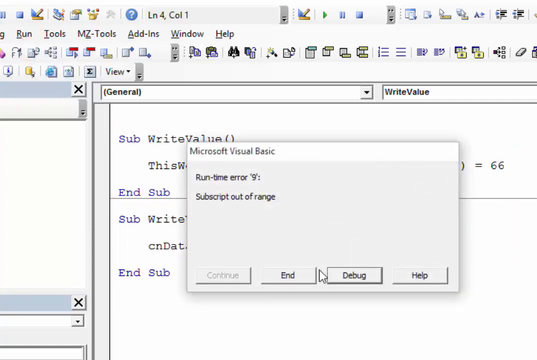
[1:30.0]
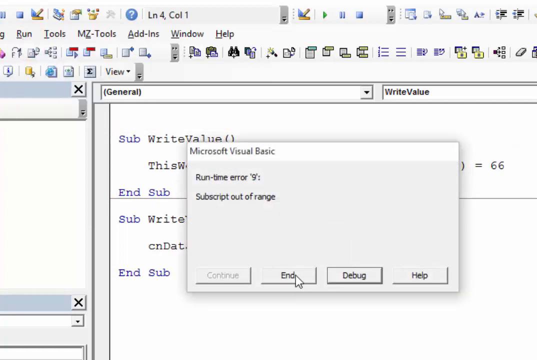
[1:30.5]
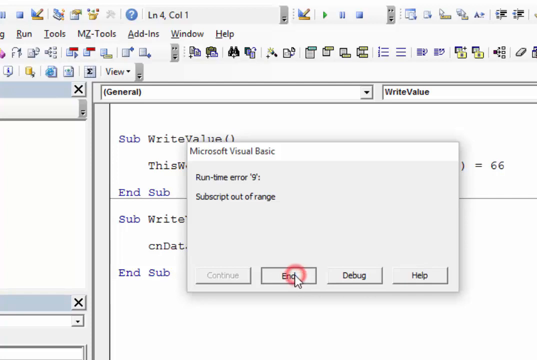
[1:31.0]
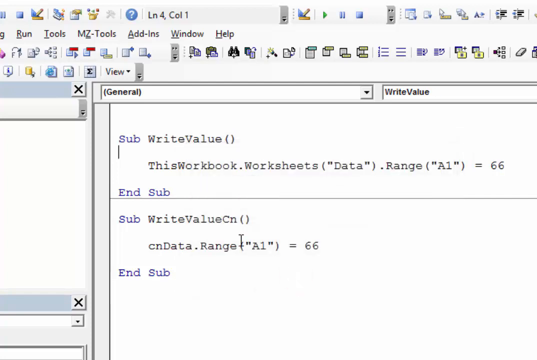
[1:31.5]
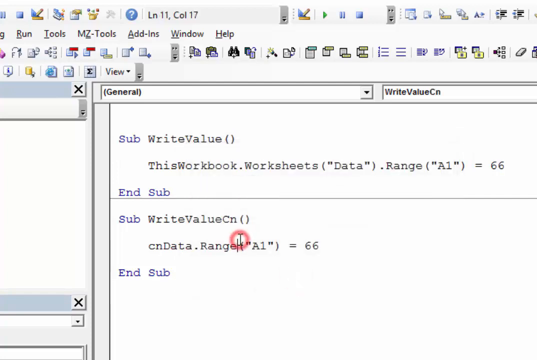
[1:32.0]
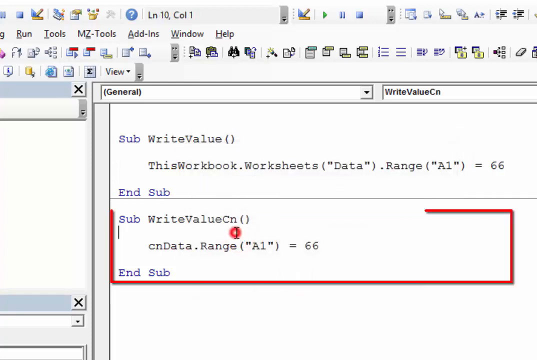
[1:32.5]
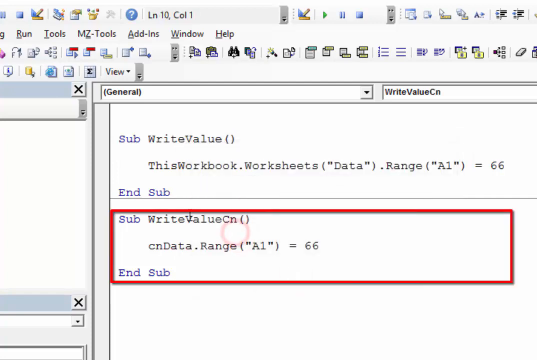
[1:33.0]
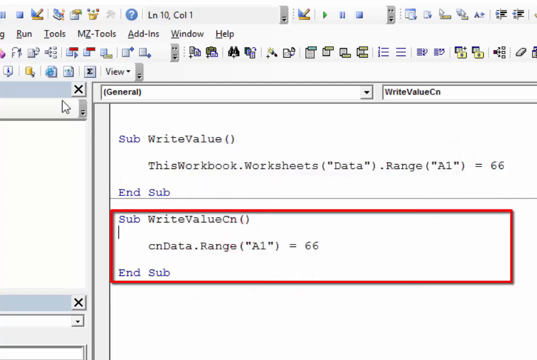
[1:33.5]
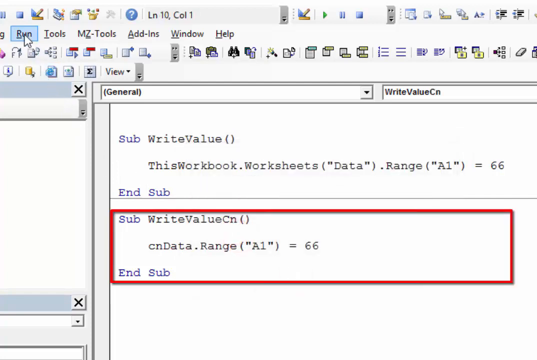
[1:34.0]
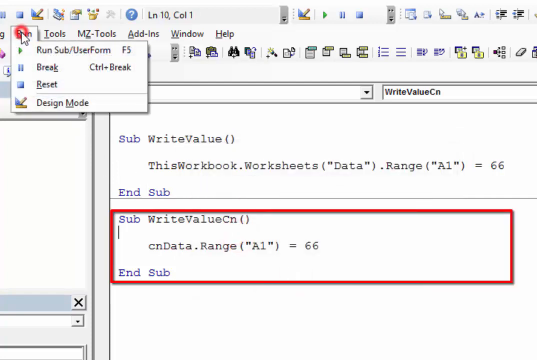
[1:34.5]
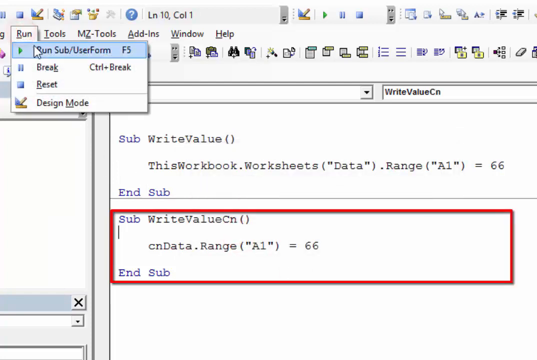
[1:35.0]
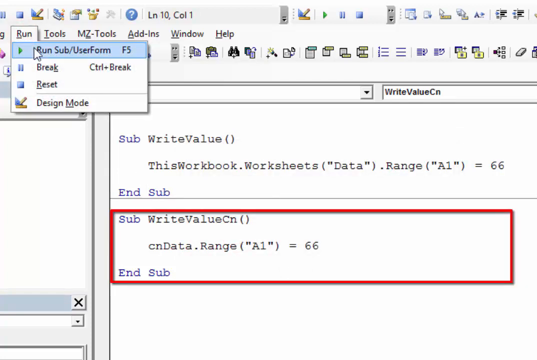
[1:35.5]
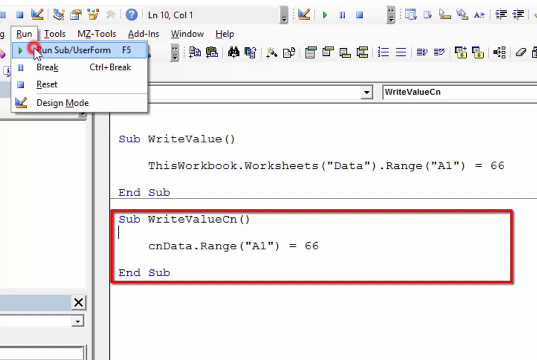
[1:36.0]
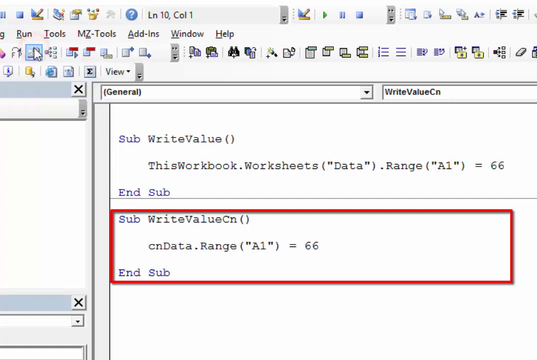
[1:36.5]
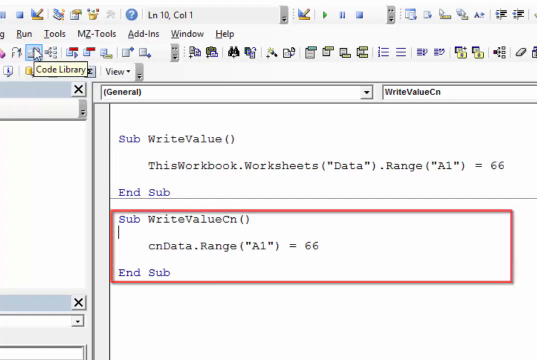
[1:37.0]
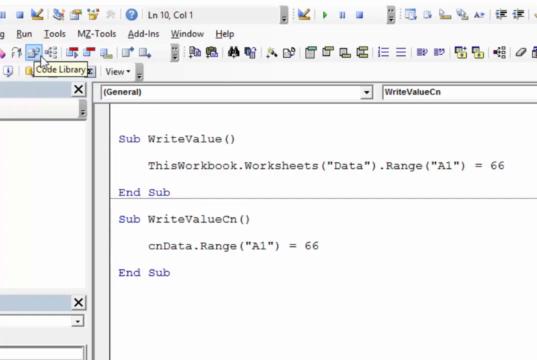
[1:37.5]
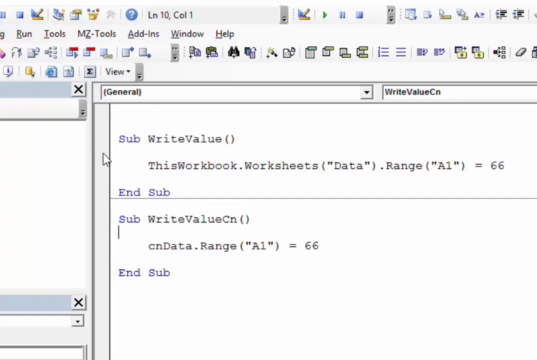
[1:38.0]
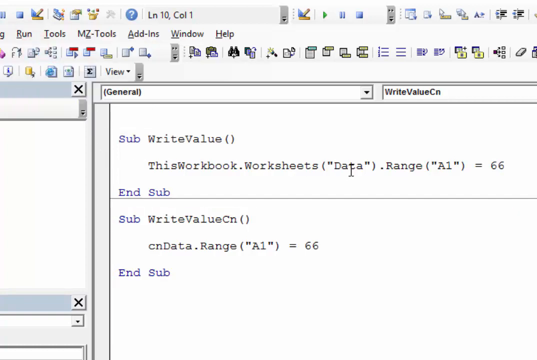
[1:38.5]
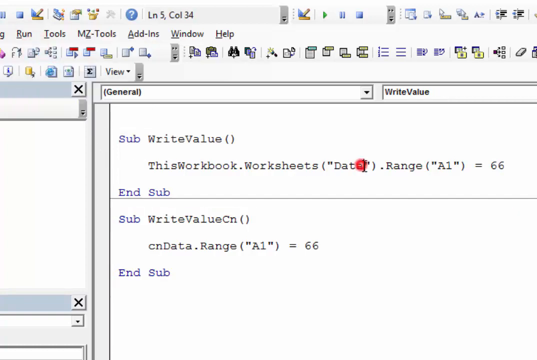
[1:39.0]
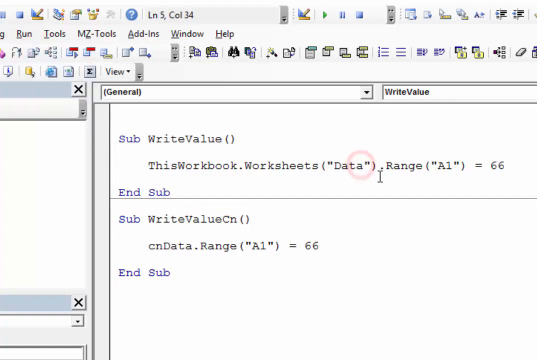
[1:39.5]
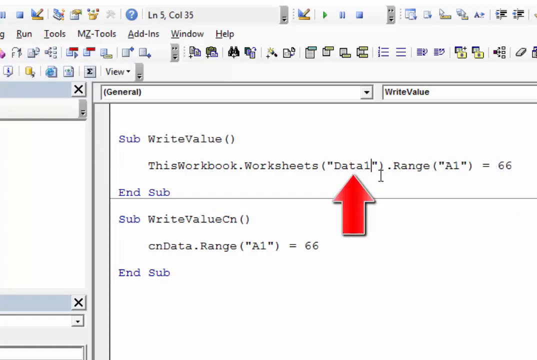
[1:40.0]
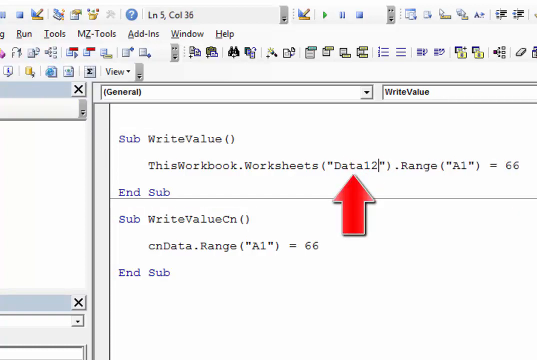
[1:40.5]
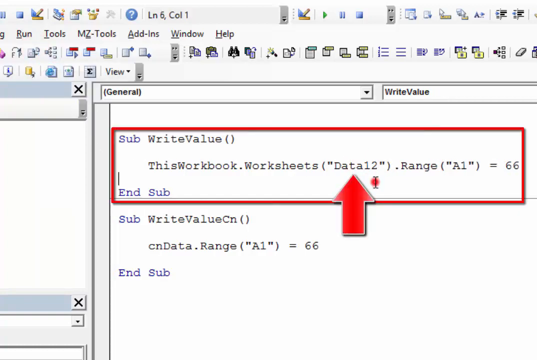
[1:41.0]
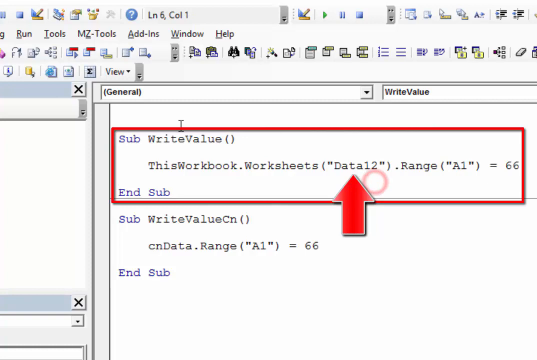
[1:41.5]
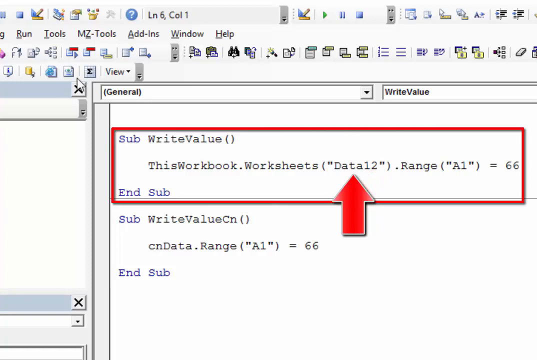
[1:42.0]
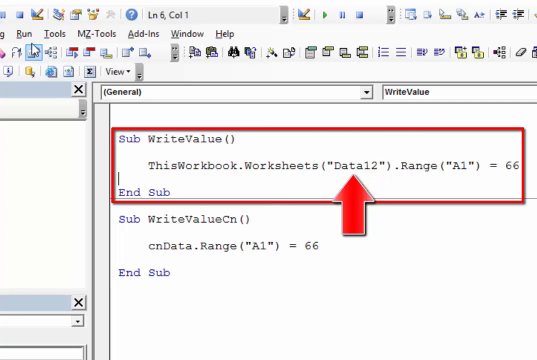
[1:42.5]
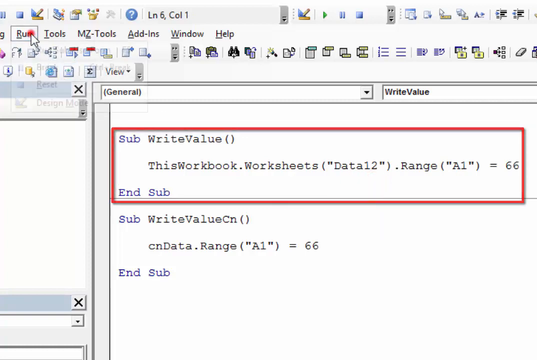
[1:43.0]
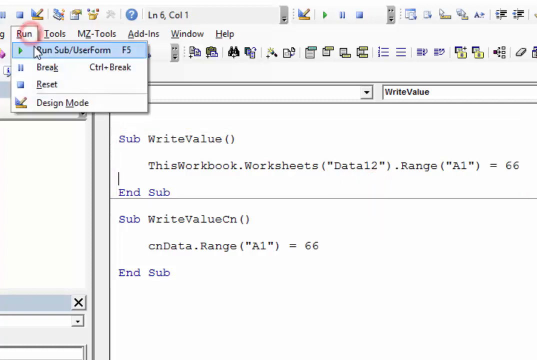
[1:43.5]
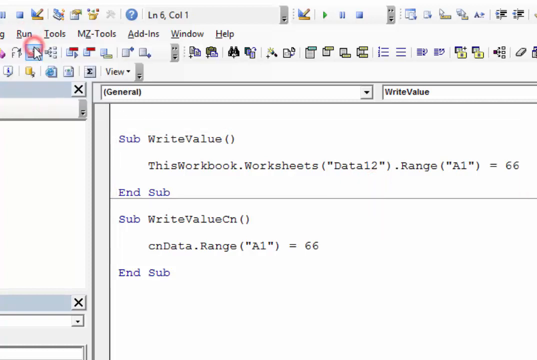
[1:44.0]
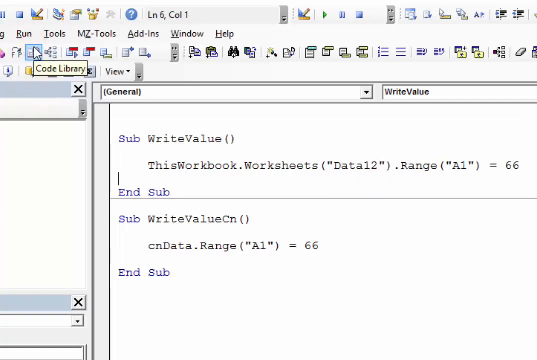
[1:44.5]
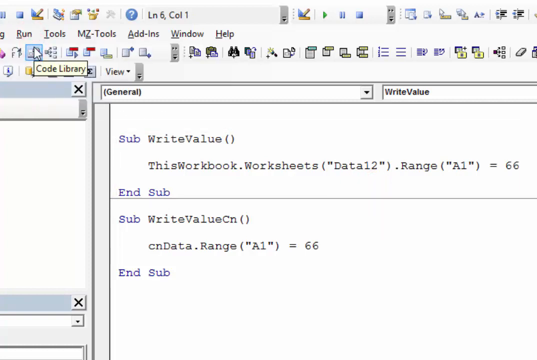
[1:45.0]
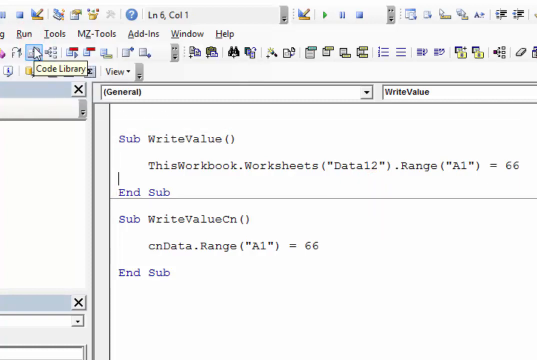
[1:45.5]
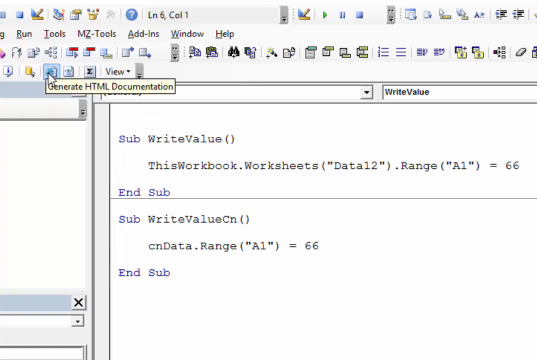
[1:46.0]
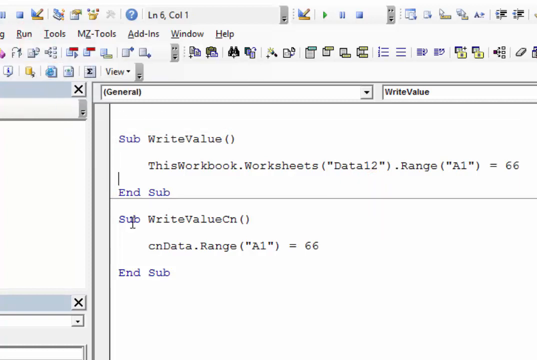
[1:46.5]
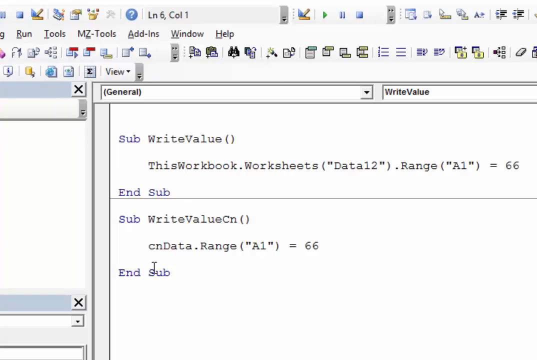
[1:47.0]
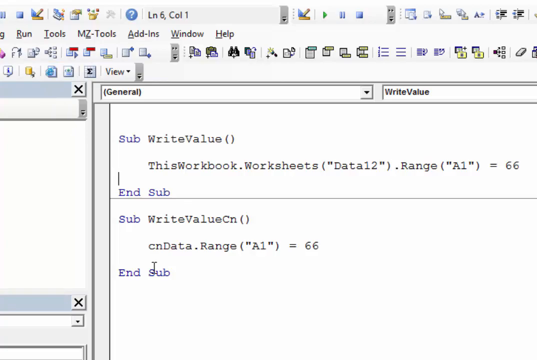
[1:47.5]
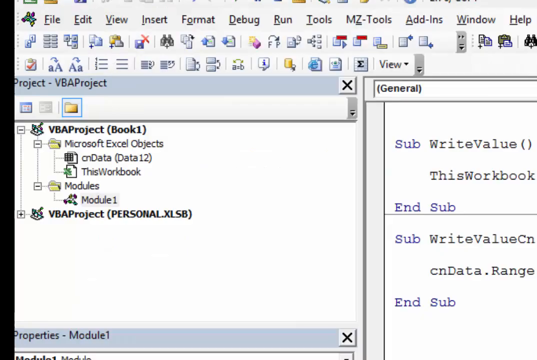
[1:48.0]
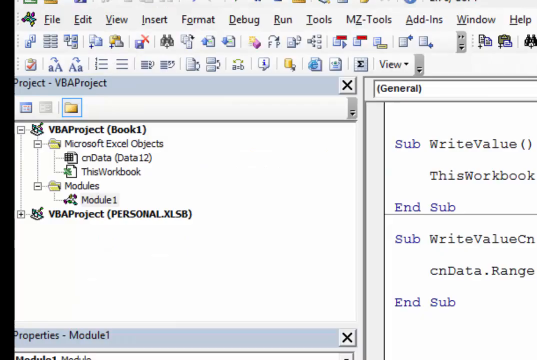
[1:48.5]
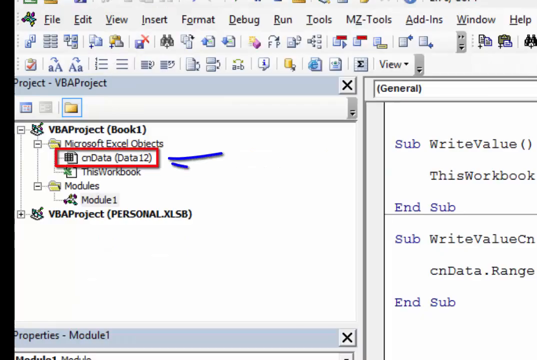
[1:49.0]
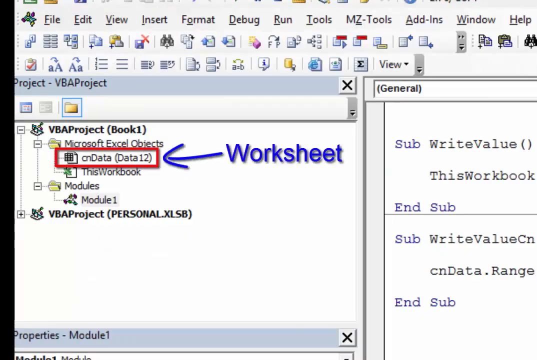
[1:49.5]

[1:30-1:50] A dialog box from the run bar at the top left corner of the workbook shows Microsoft Visual Basic with an error message about something being "out of range." The view returns to the workbook, where the name now appears as "data 12" on the data sheet.